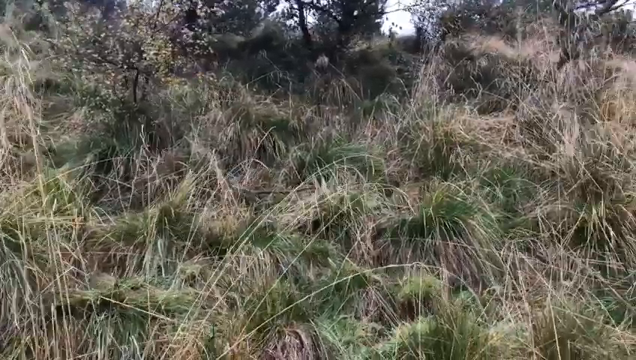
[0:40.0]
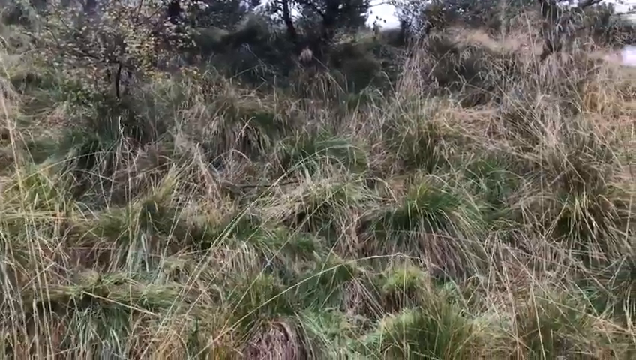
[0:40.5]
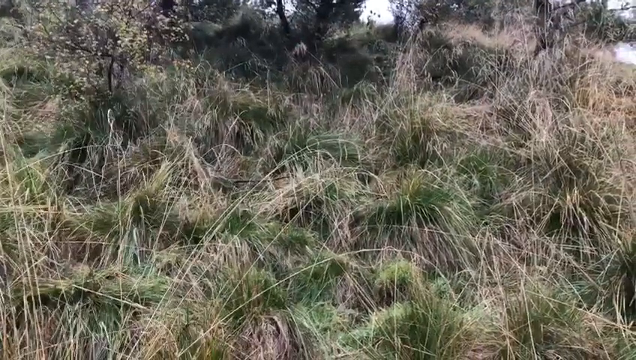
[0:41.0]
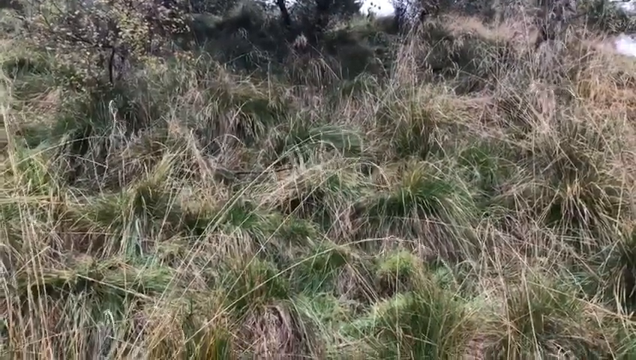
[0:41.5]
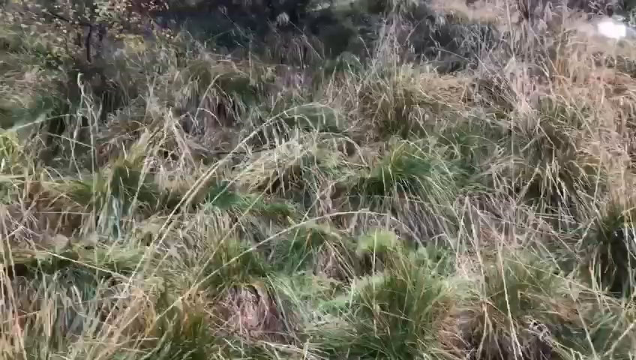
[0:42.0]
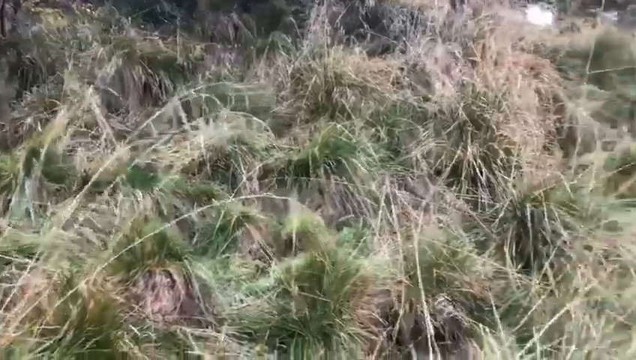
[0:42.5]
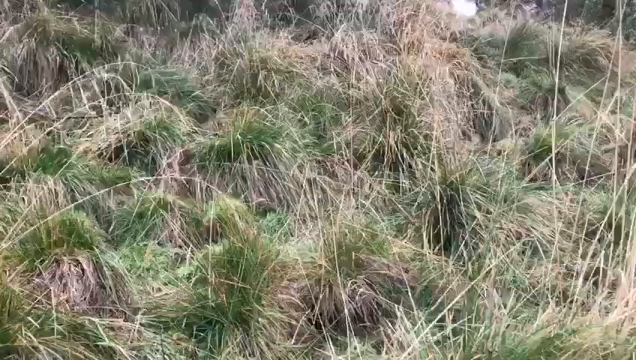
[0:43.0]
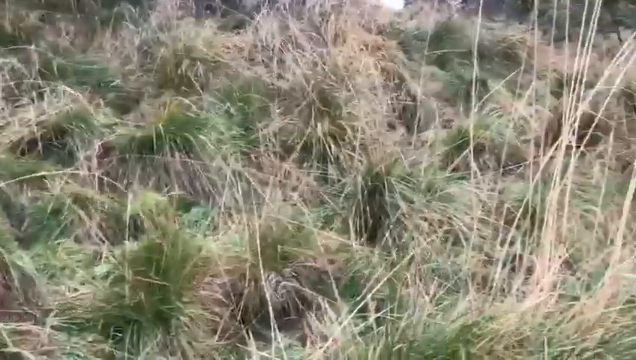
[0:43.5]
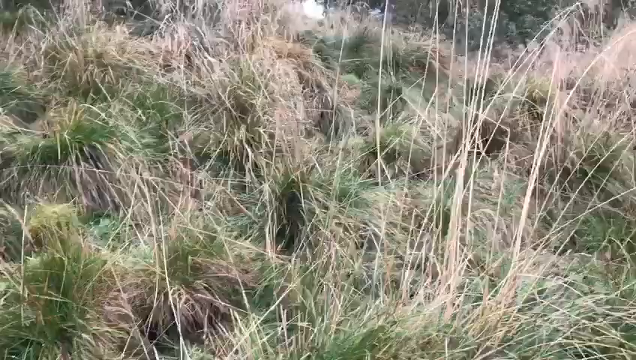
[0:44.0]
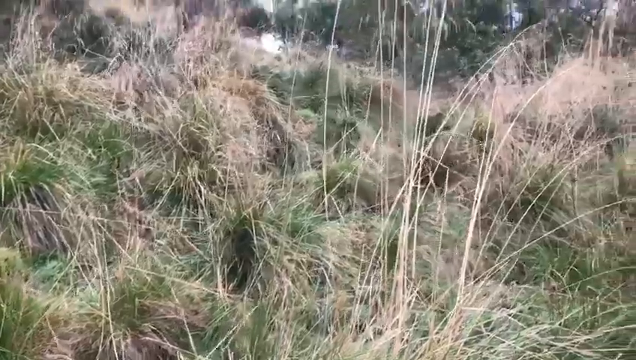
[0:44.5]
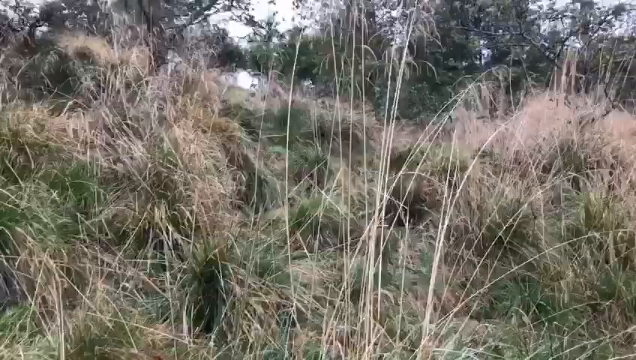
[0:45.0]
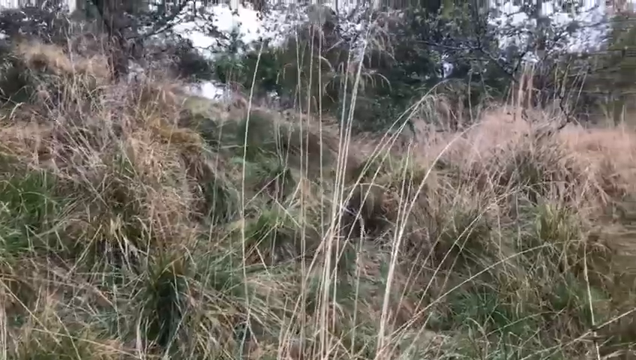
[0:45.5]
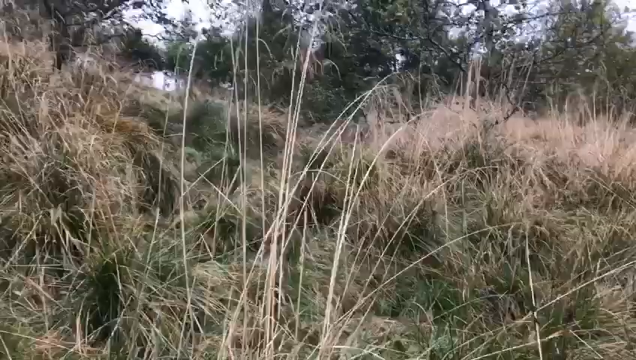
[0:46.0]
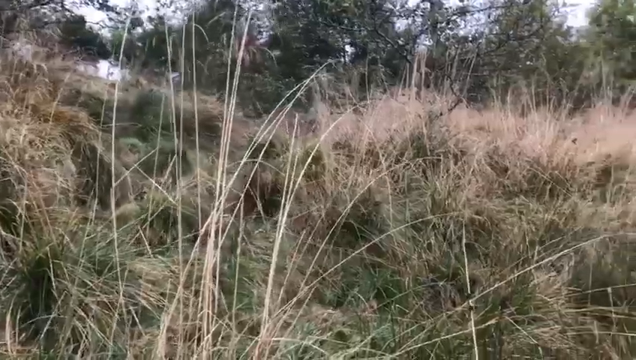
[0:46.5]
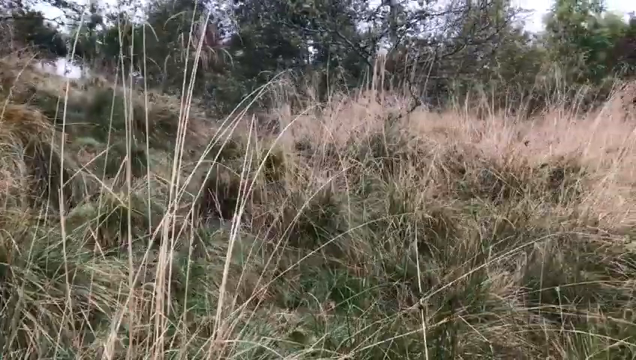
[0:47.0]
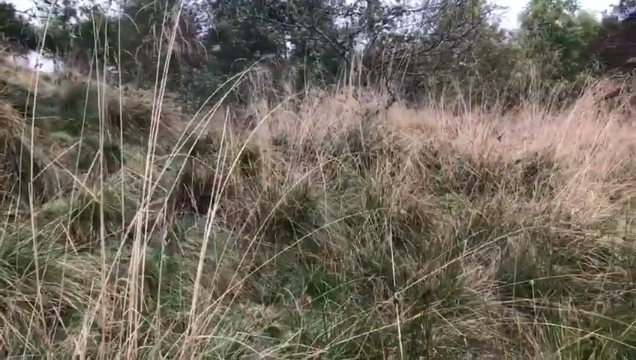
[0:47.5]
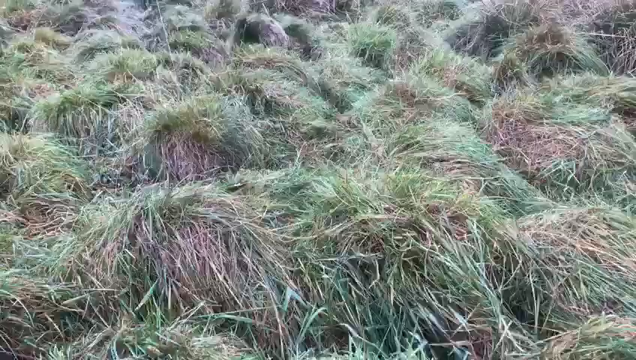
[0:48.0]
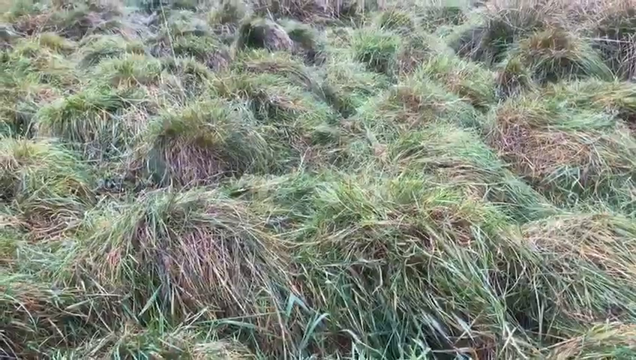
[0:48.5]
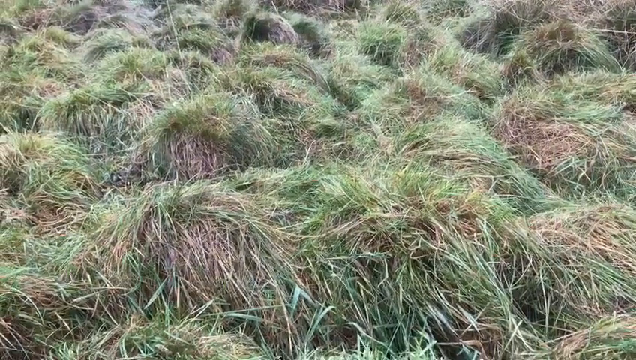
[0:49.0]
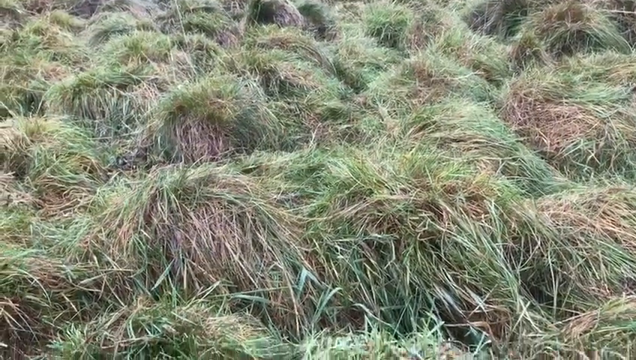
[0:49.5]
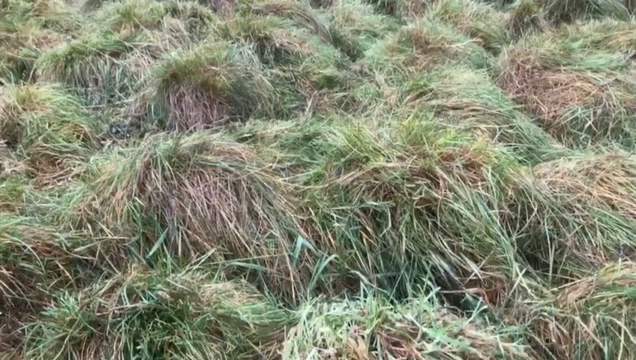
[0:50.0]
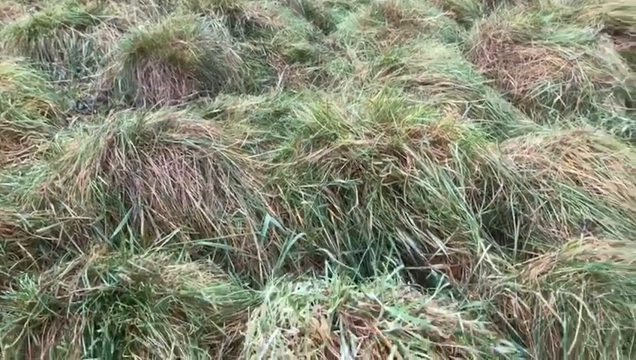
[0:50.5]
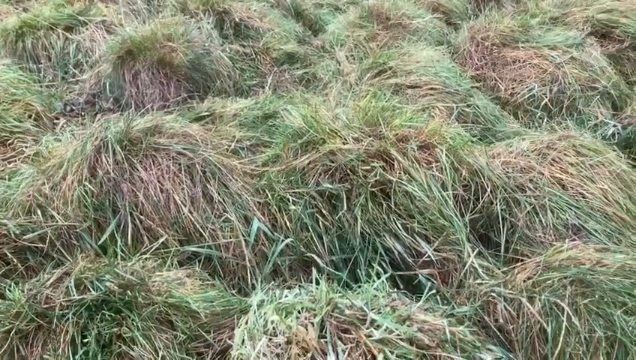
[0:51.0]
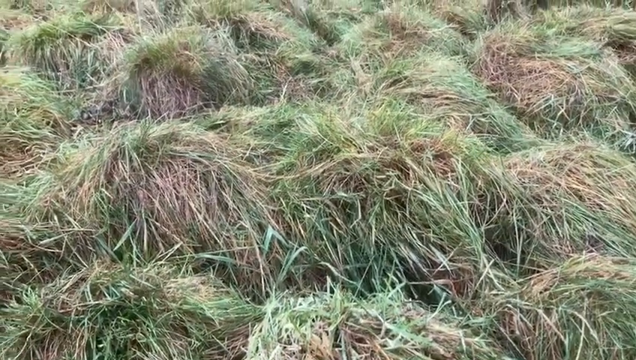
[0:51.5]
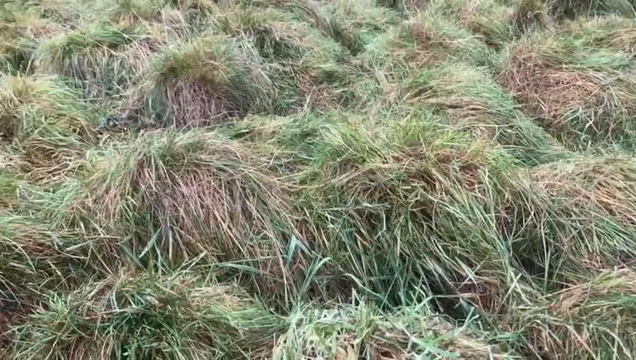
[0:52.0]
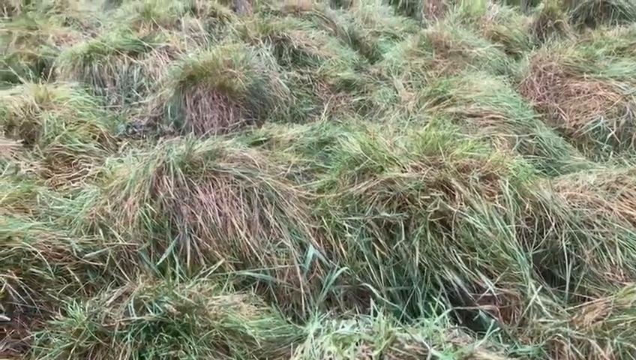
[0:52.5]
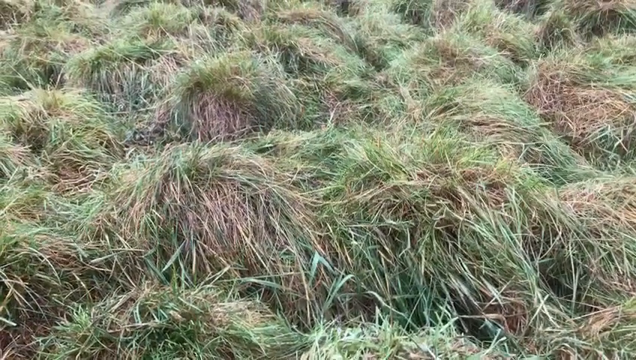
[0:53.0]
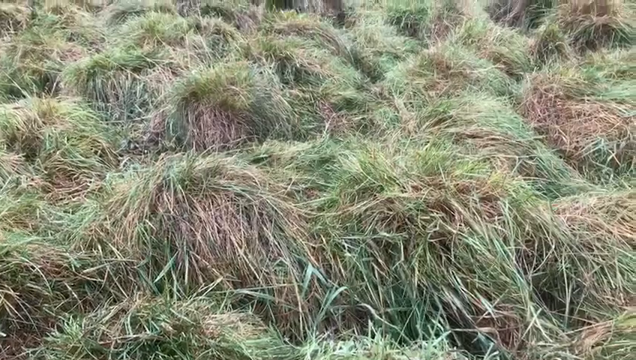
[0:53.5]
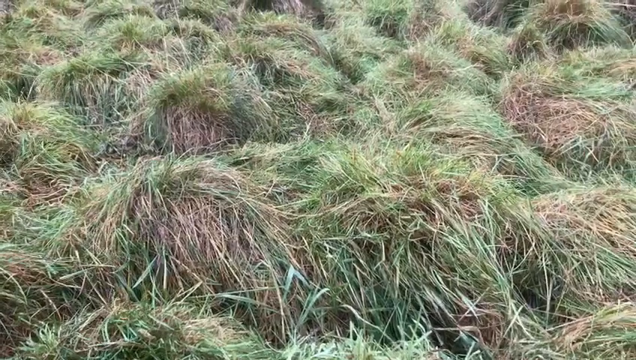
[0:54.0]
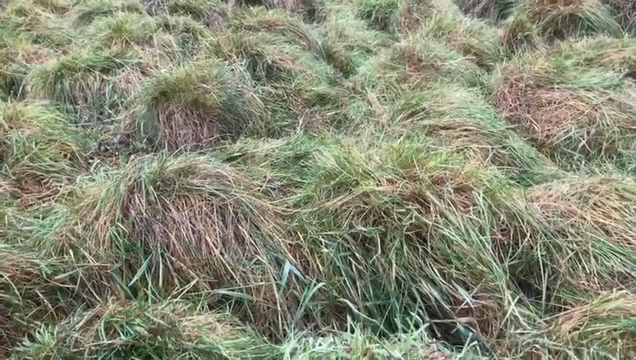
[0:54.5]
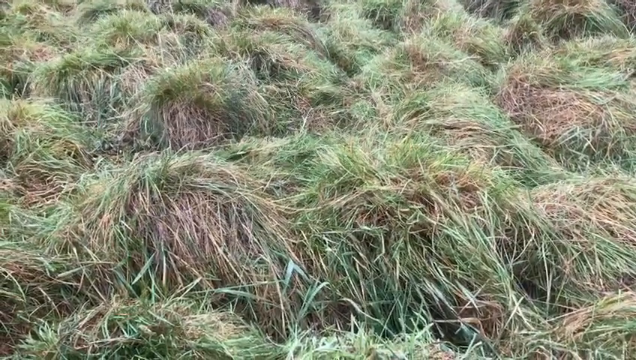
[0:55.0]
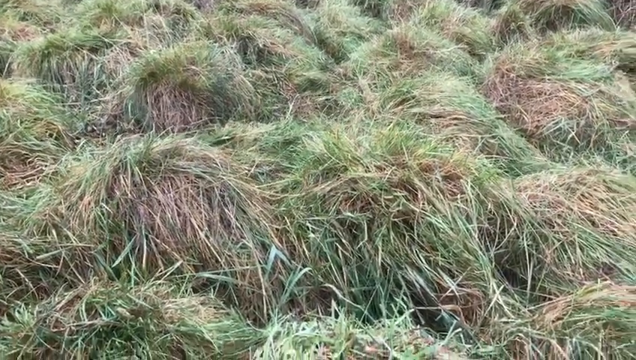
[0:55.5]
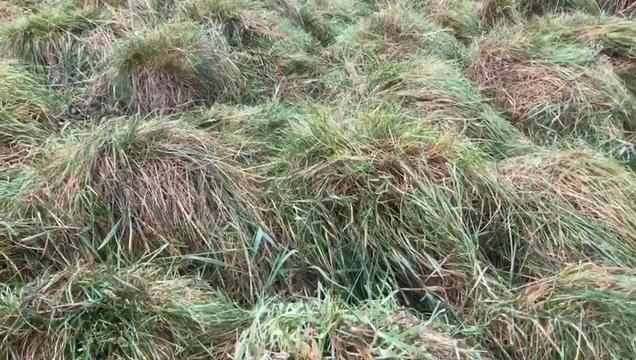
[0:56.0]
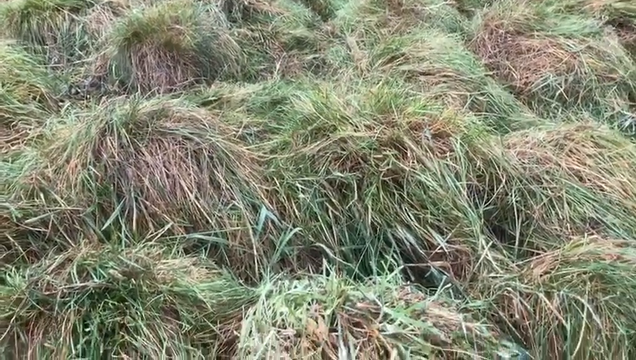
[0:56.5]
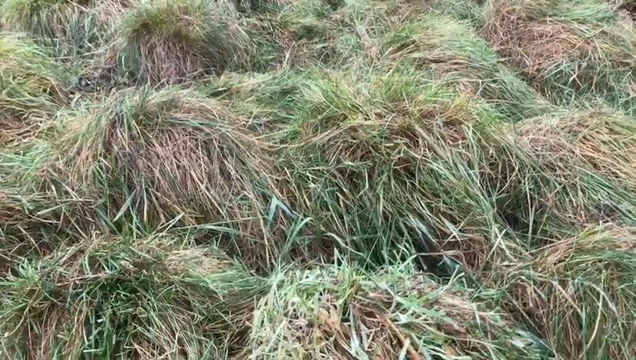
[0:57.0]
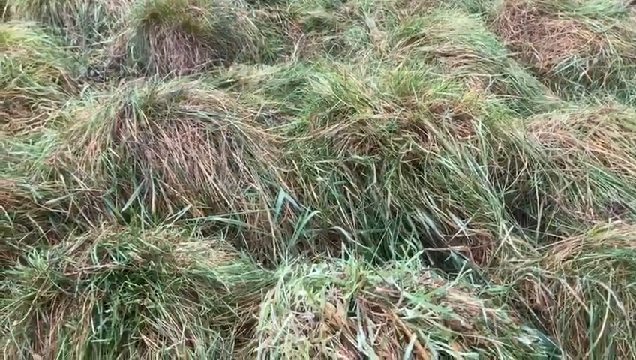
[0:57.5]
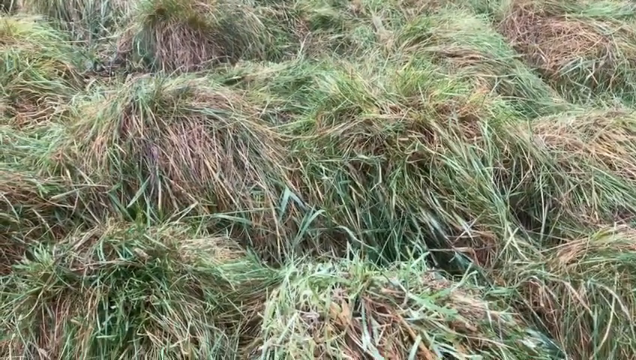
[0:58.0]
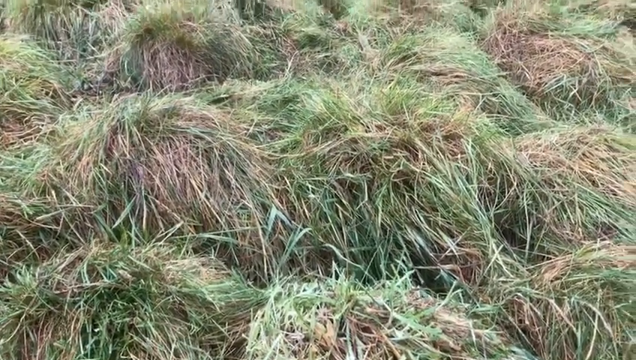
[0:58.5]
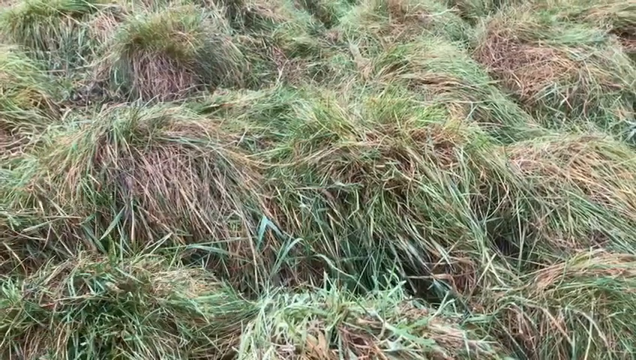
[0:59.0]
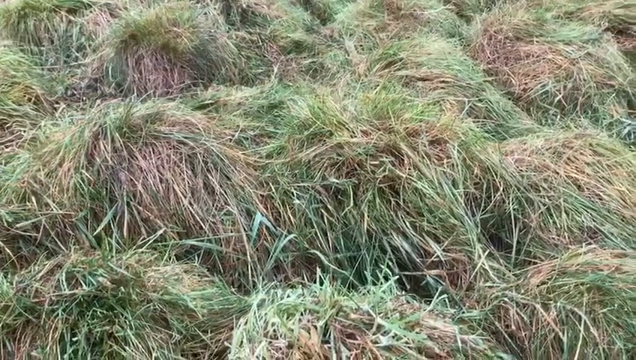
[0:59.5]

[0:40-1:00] The camera pans across a steep hillside pasture with deep, thick grass. As it pans upward, scattered trees appear in the distance next to an overcast sky. The camera zooms in on an area of the pasture showing fairly long tufts of grass, beige and tan with green showing through, as though there is both older growth and new growth in the thick, dense pasture. The camera is in constant motion, with slow left and right pans and close-ups in which it moves in a slow circular fashion. Finally the view looks uphill to several trees, with the edge of the hilltop skyline showing at the very top of the screen.